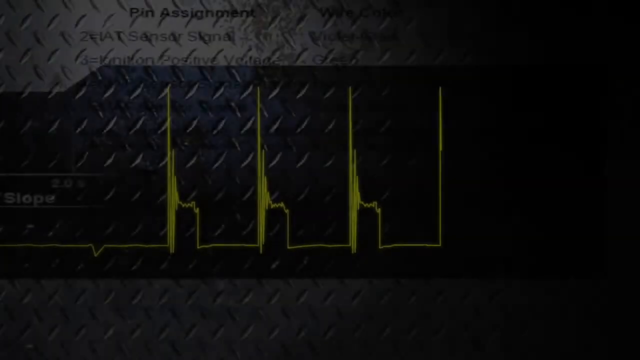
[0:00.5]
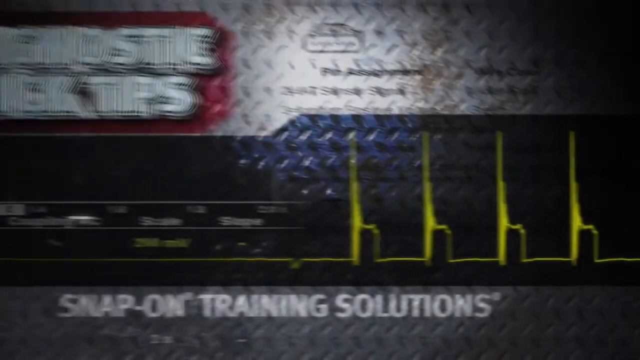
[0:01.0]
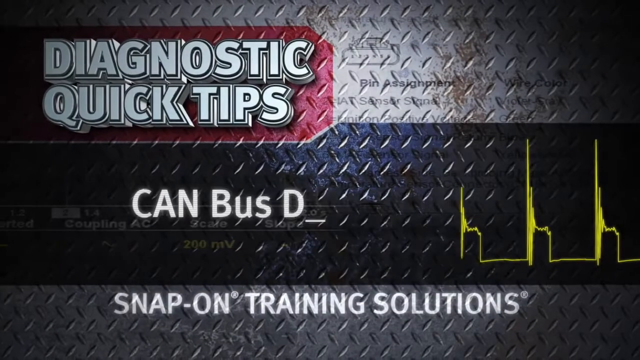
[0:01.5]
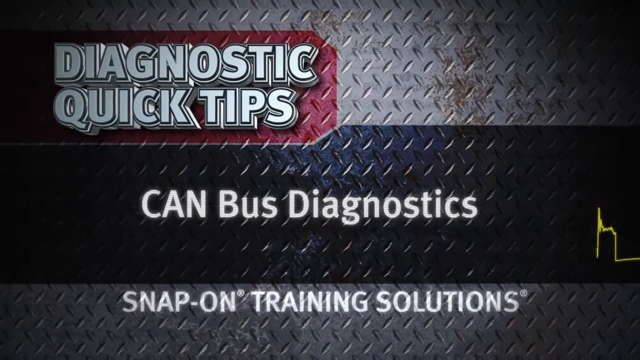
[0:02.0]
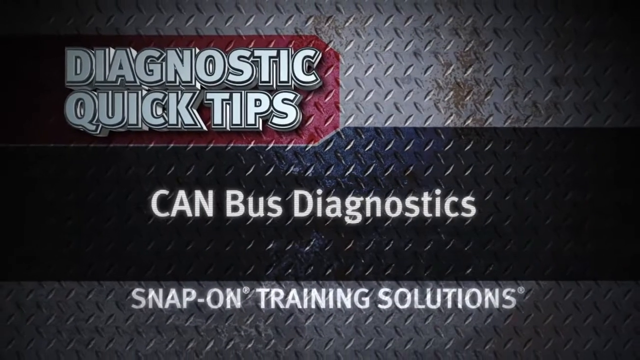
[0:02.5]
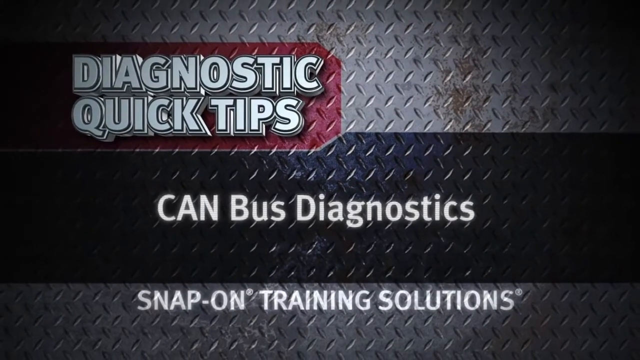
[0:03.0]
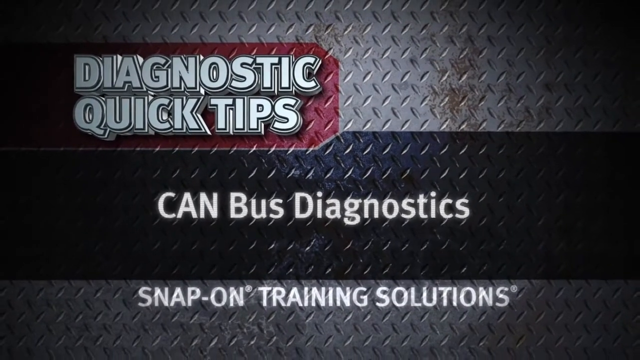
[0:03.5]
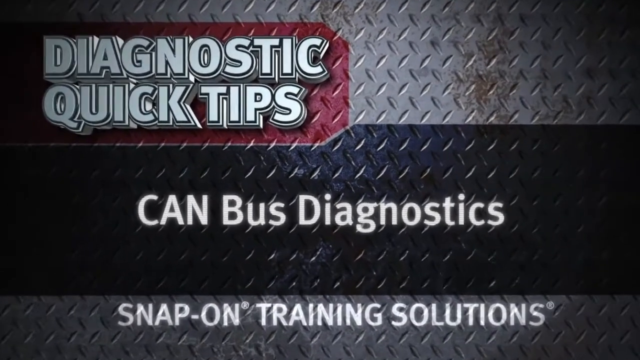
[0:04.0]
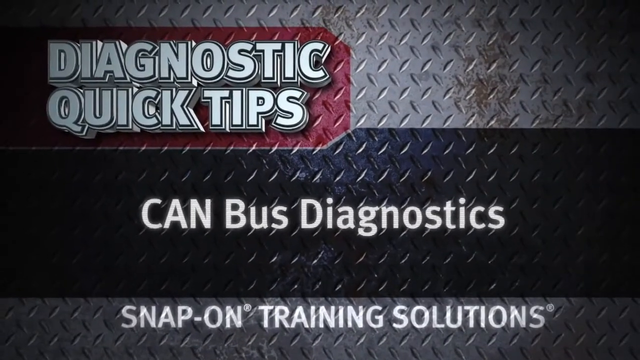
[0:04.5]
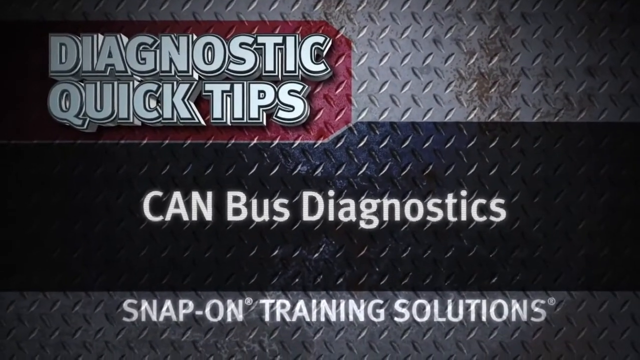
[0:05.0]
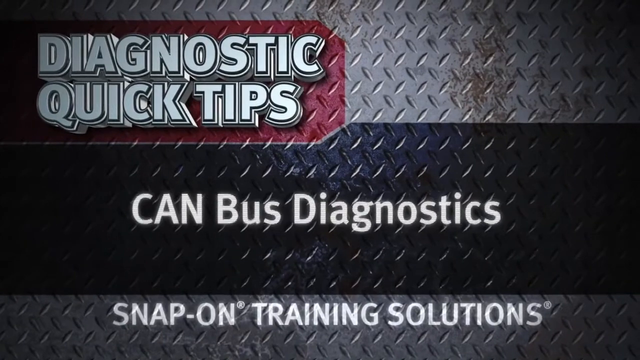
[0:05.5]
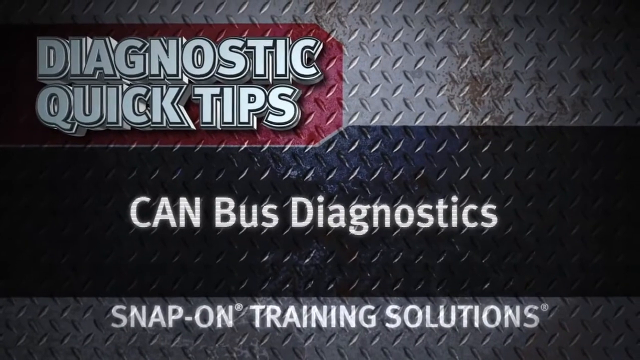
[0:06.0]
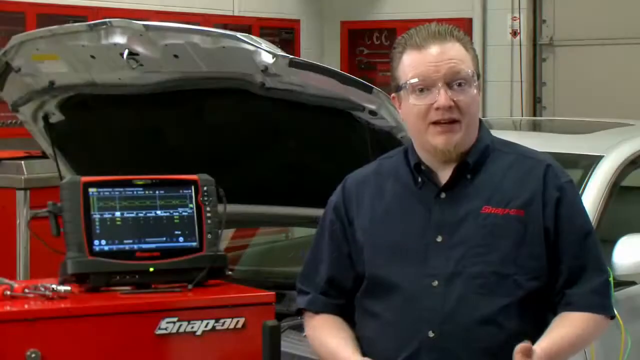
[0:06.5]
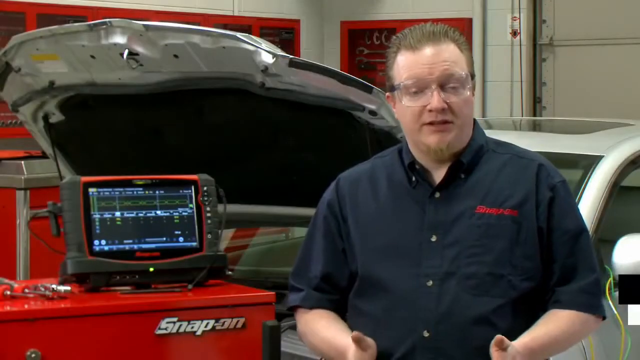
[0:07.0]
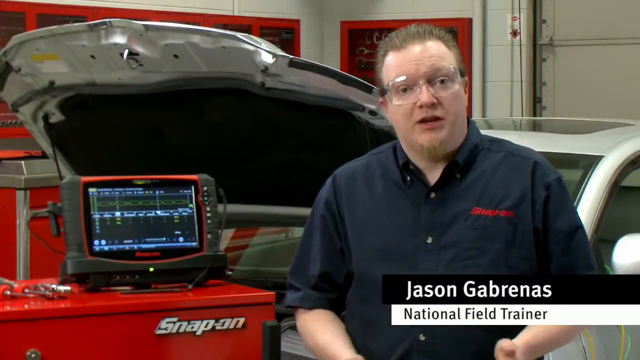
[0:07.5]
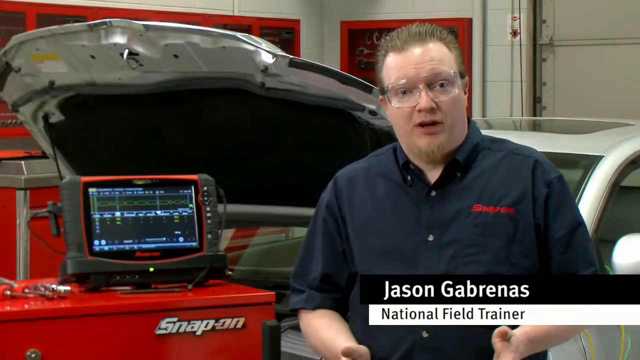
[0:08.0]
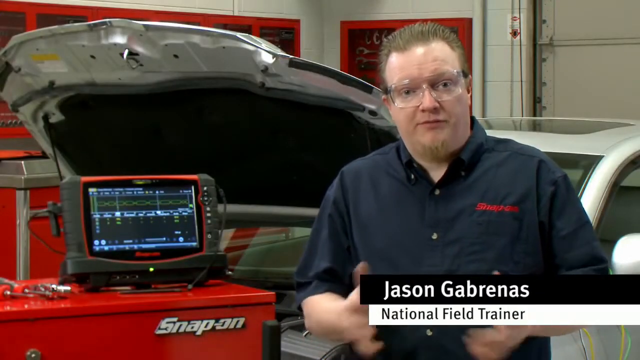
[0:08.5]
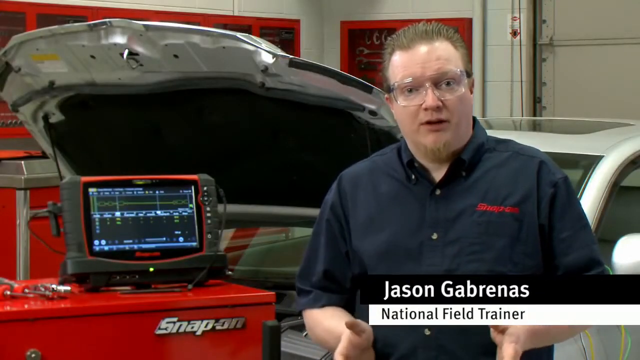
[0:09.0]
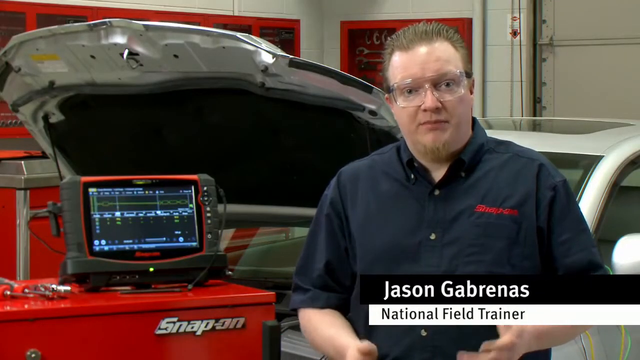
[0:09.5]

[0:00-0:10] The video opens with the text "Diagnostic Quick Tips Can Bus Diagnostics, Snap-on Training Solutions." A man, identified as Jason Gabrenas, a national field trainer, sits in front of a car, speaking into the camera. Behind him is some sort of display. He wears a dark blue shirt that says "Snap-on."